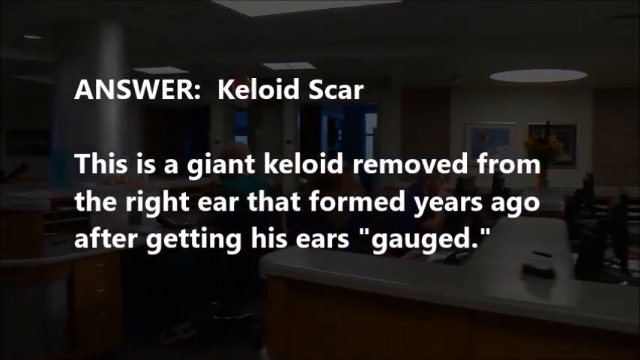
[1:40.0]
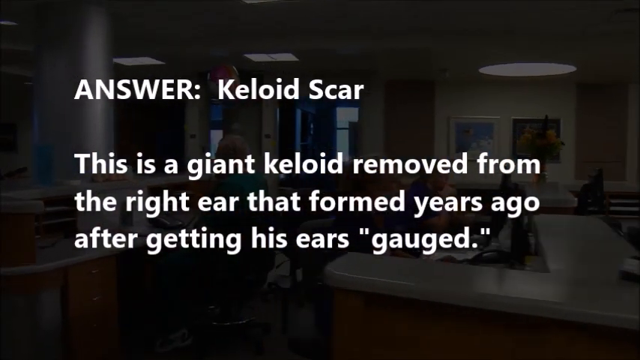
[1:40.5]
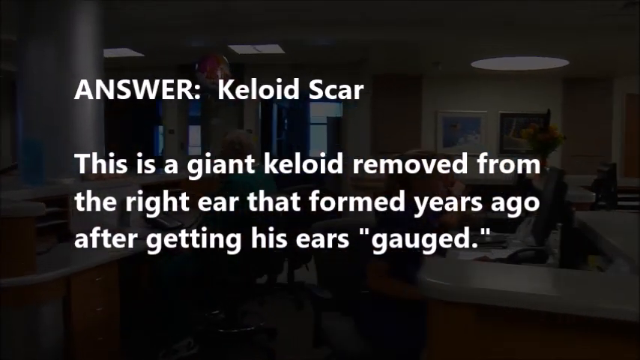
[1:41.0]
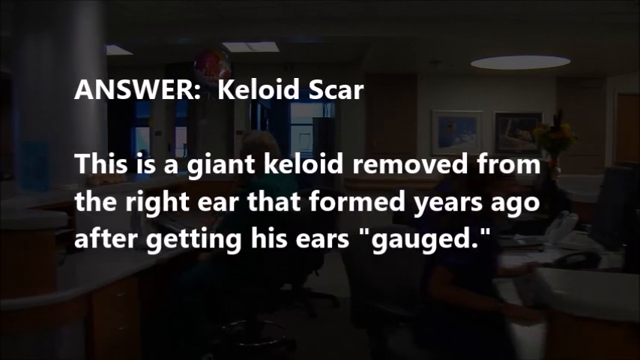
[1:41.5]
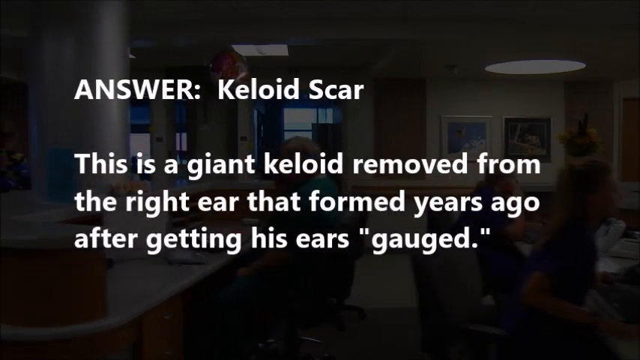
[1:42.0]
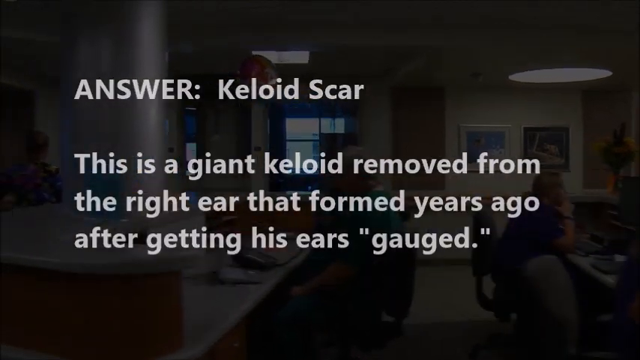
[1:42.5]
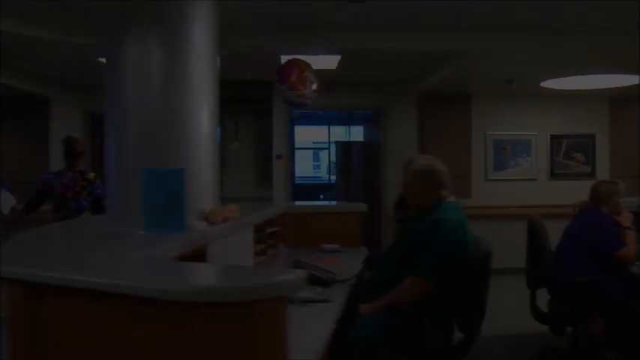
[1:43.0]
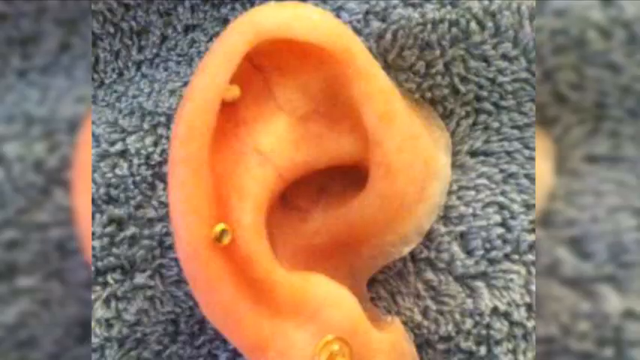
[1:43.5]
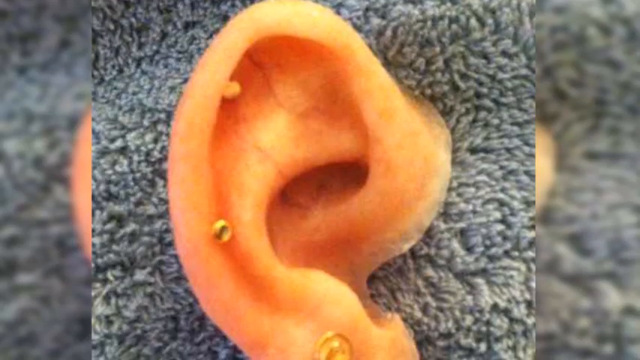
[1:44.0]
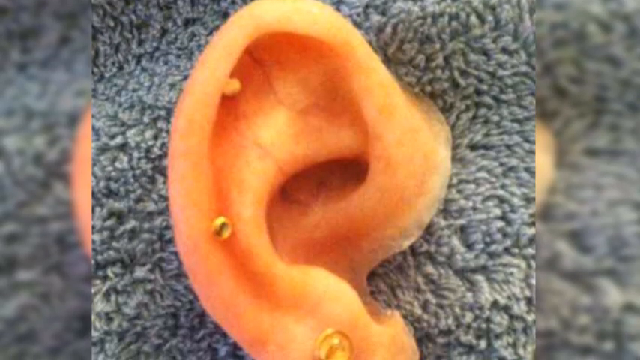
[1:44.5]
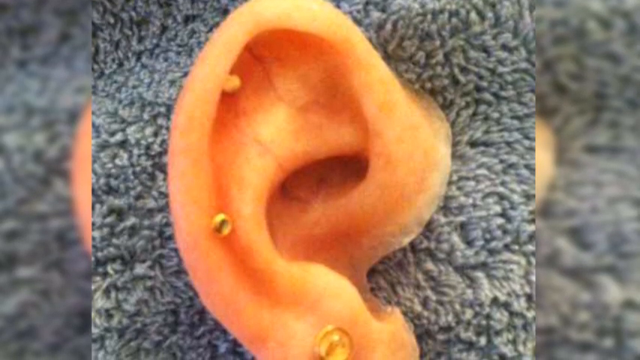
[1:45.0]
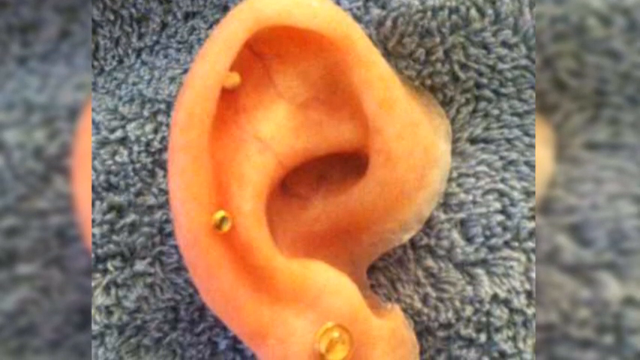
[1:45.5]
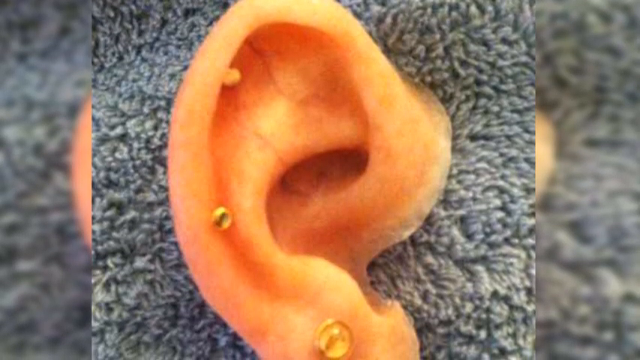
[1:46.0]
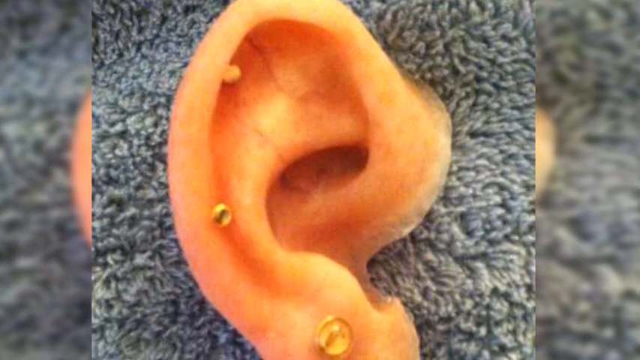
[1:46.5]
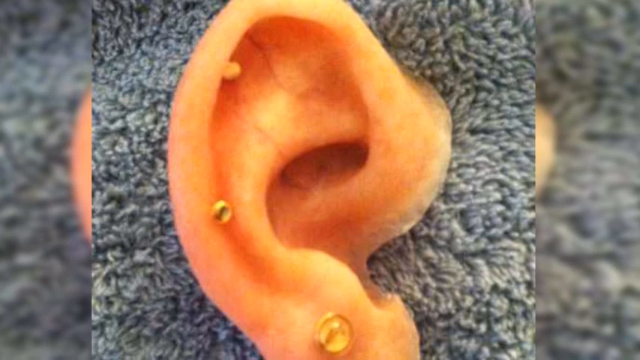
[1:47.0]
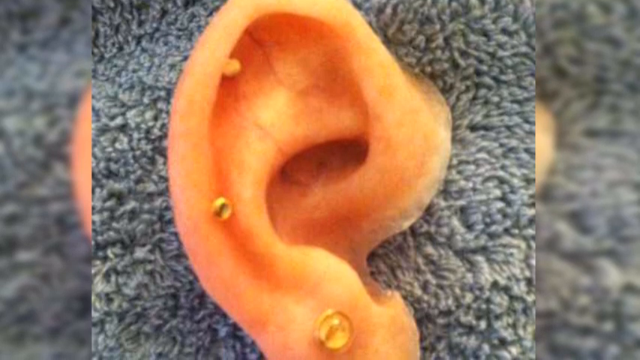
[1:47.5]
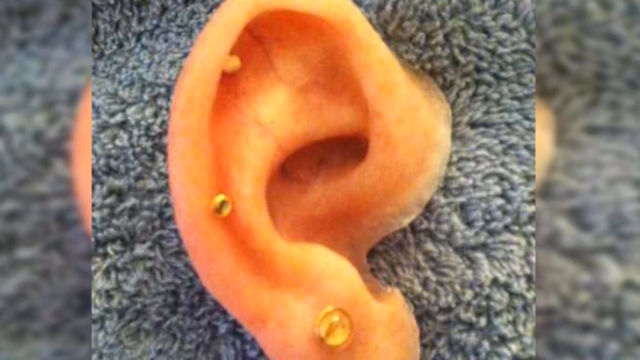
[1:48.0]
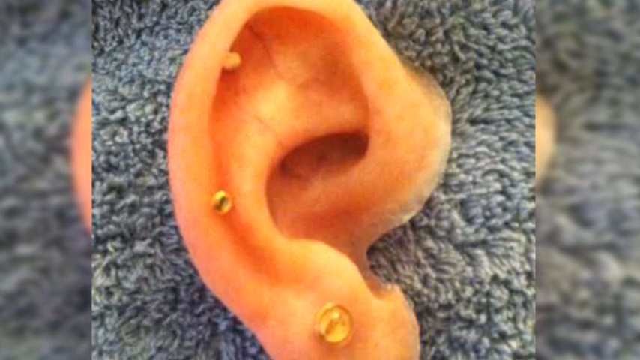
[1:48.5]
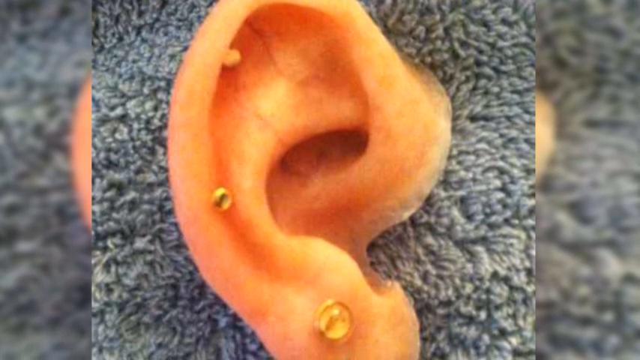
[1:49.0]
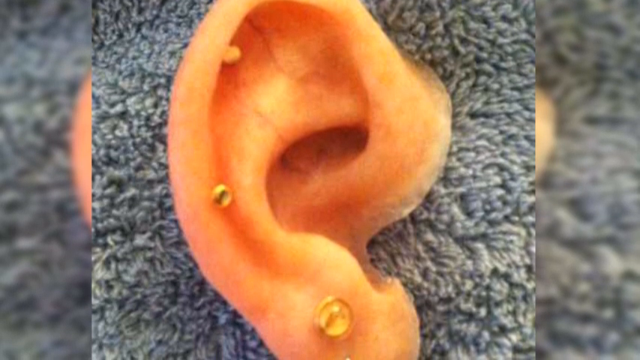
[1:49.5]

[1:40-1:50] The description page for the keloid scar continues, reading "This is a giant keloid removed from the right ear that formed years ago after getting his ears gauged", with a darkened image of a hospital nurses' station or reception area behind it. Then a close-up shows an ear detached from a head, with small gold circular lesions on the inner part of the outer rim. The ear is sitting on a grey fluffy material. There is also a gold circular lesion at the bottom of the earlobe. These are possibly gold jewellery.